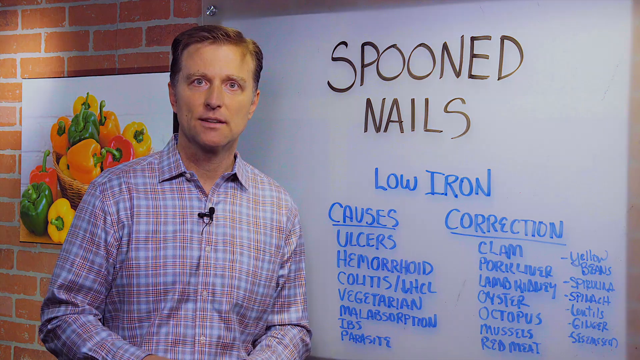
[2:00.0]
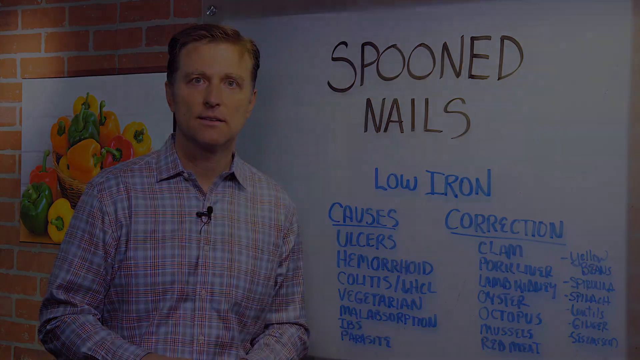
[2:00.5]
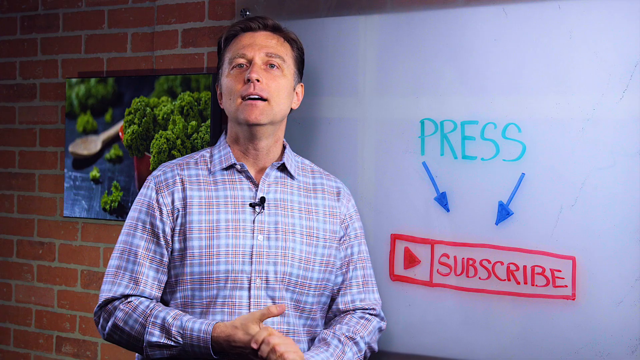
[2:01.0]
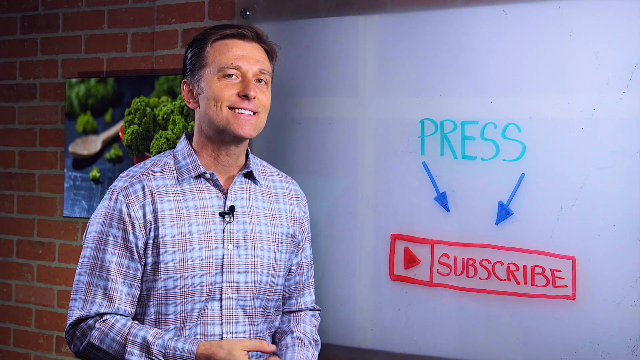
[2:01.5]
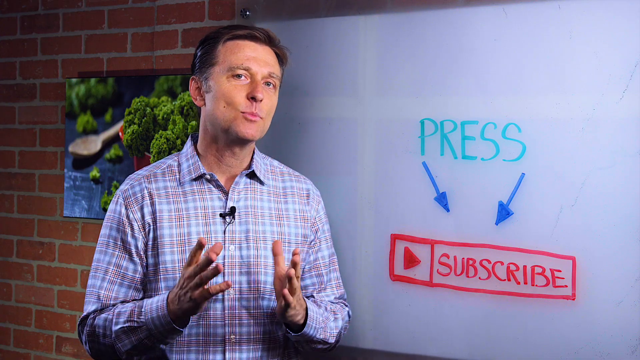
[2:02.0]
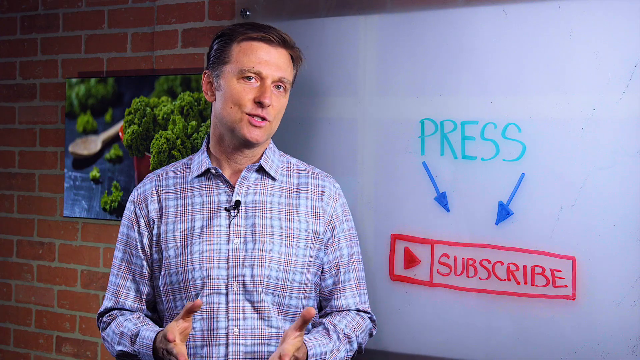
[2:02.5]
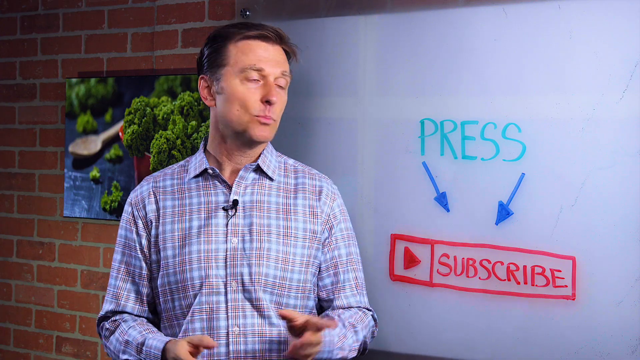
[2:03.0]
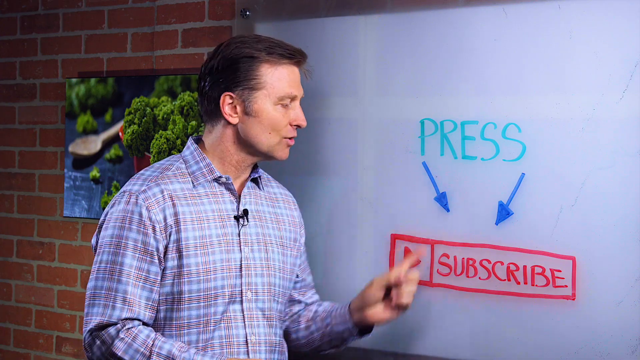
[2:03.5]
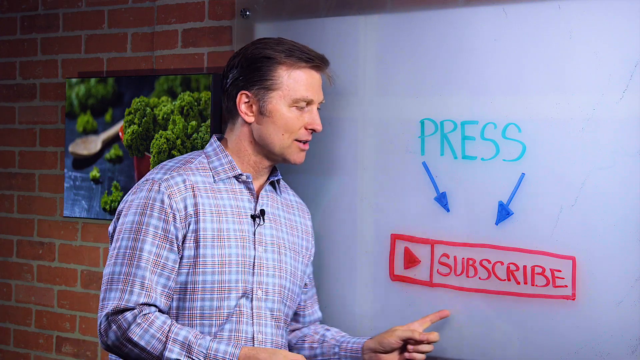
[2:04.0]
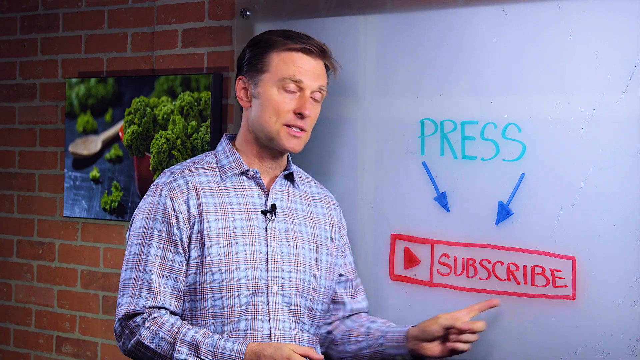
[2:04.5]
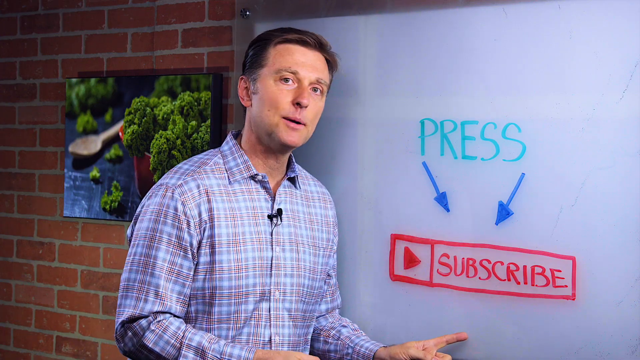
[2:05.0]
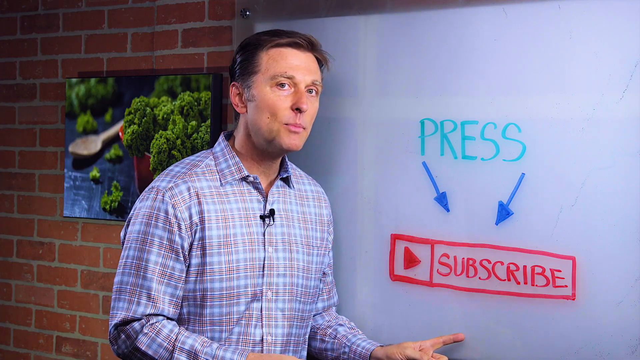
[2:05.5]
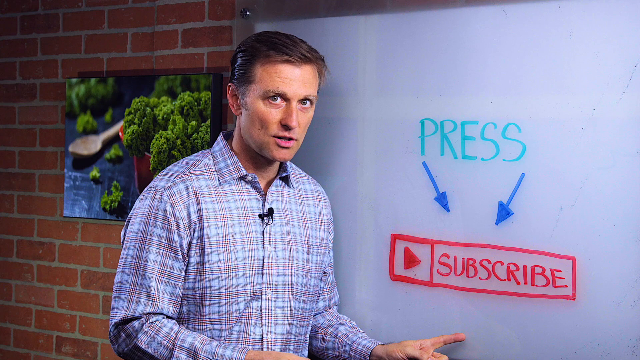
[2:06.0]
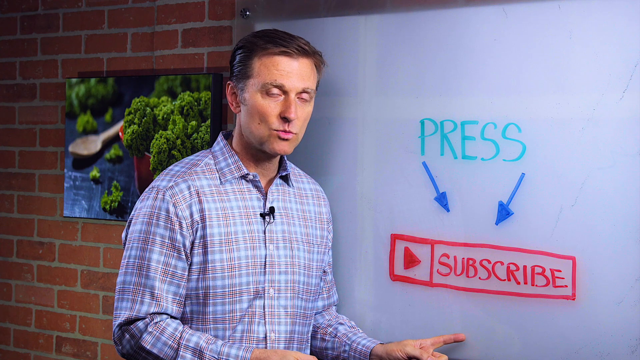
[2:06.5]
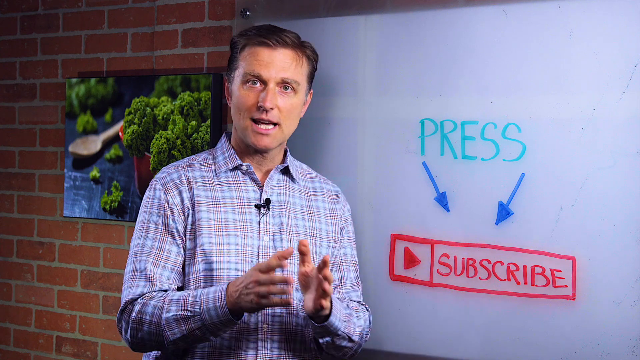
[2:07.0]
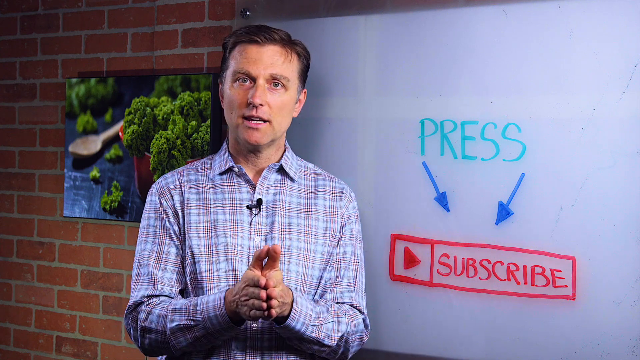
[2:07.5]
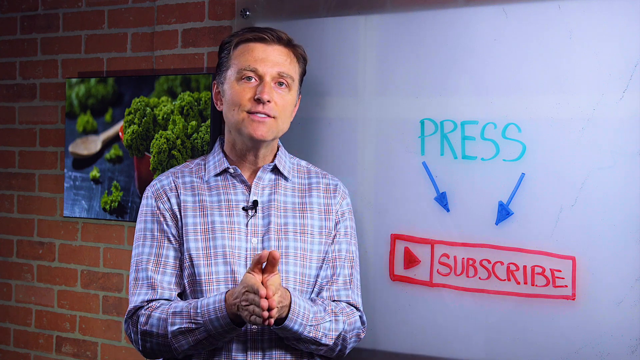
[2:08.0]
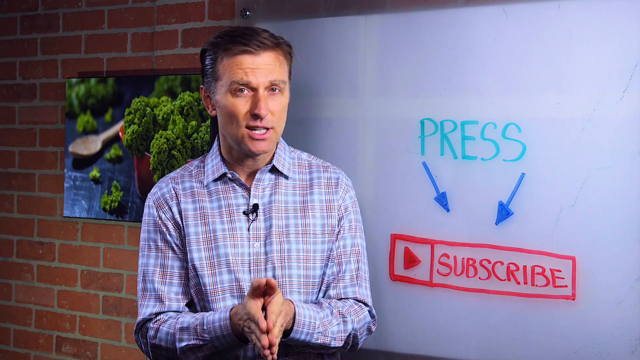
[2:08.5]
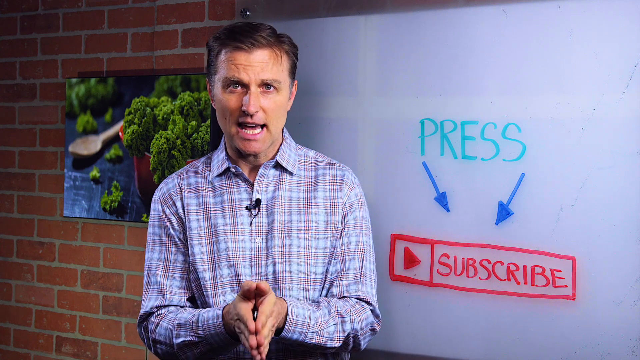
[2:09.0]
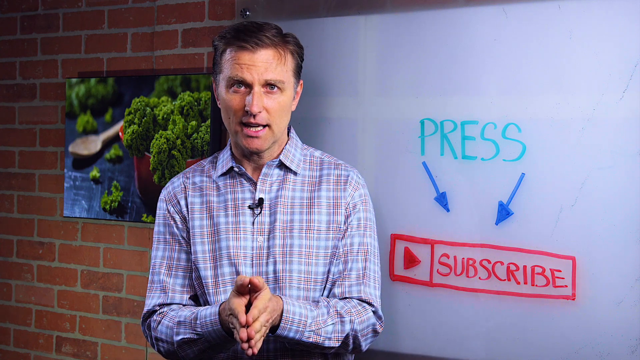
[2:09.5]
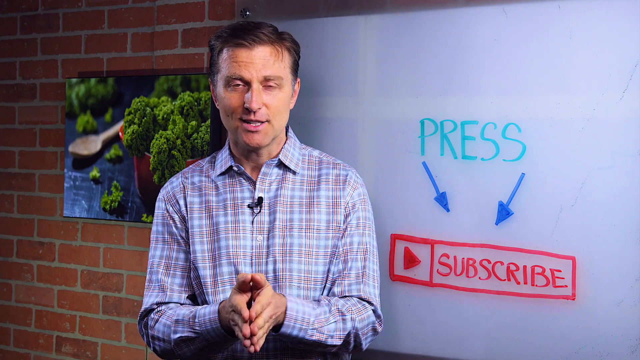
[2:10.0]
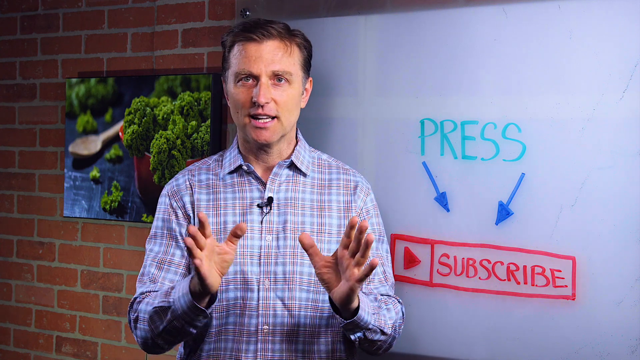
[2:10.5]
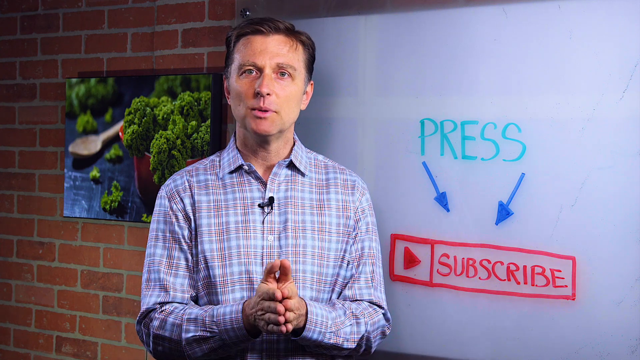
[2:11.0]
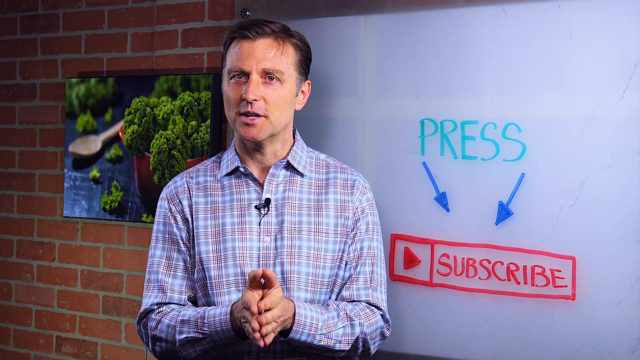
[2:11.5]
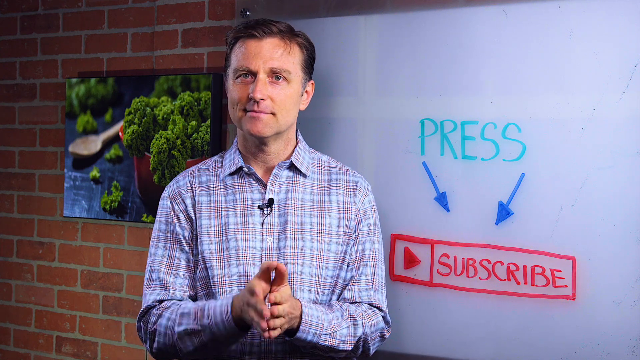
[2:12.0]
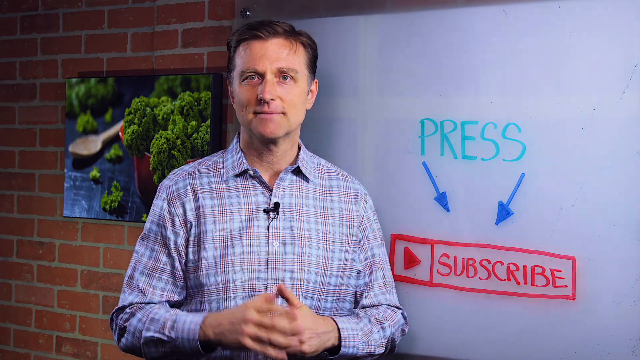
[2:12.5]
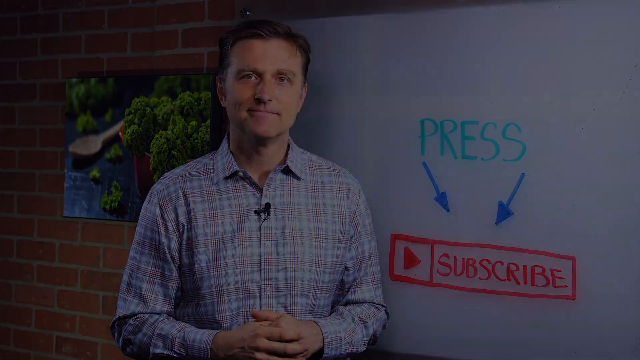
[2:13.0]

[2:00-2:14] In a classroom-like setting with a brick wall and a smallish painting, a white man stands next to a dry erase board, a microphone clipped on his button-up shirt. He looks into the camera very seriously, and then the camera kind of fades out. When it comes back, it shows the same man looking a little different: he wears a different outfit, still has the microphone clipped on, and stands in front of a different wall with a different painting. The dry erase board now has something different on it, reading "press and subscribe". He turns toward the board and points at the word "press" with his left hand and left pointer finger.